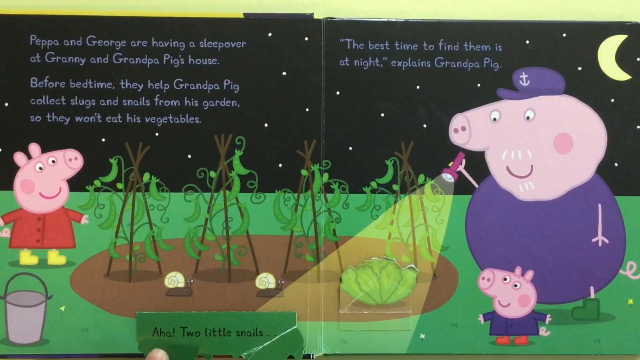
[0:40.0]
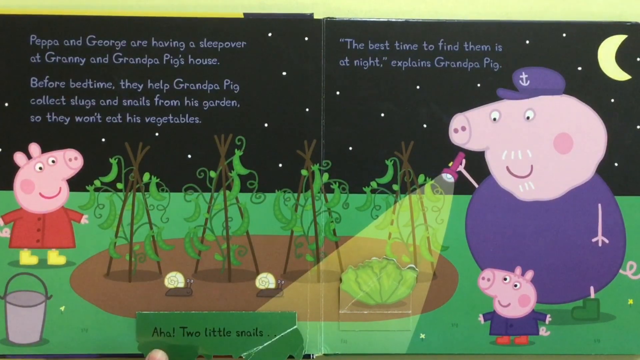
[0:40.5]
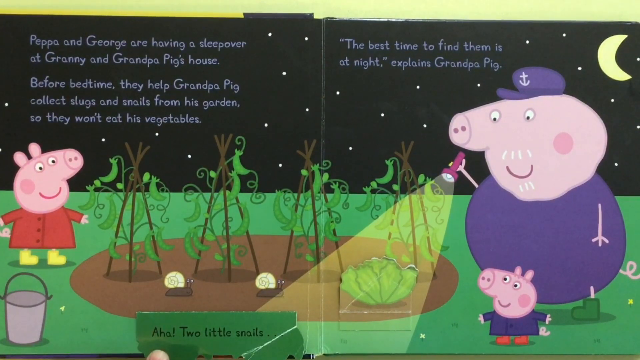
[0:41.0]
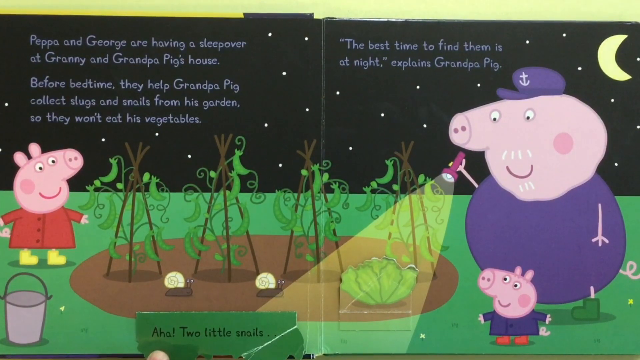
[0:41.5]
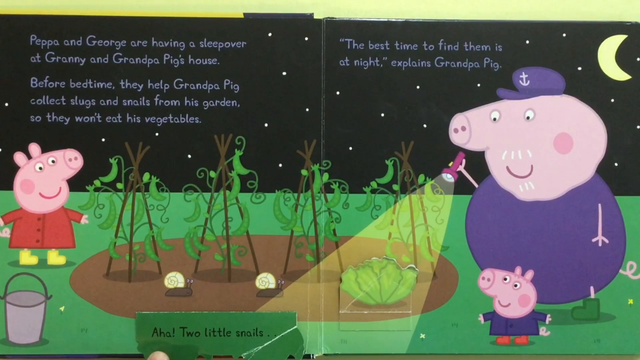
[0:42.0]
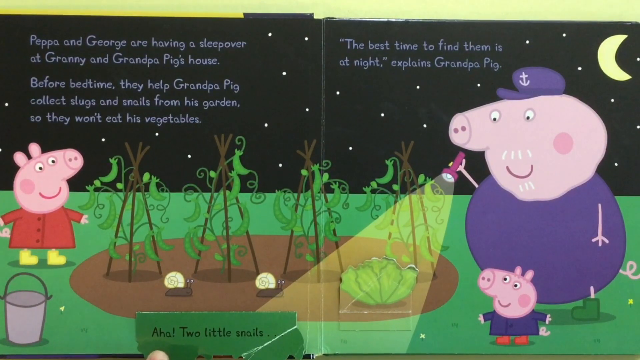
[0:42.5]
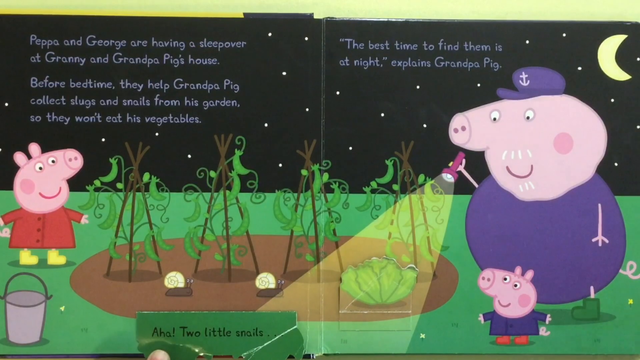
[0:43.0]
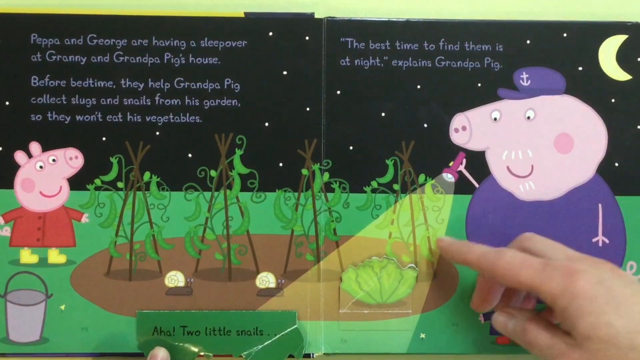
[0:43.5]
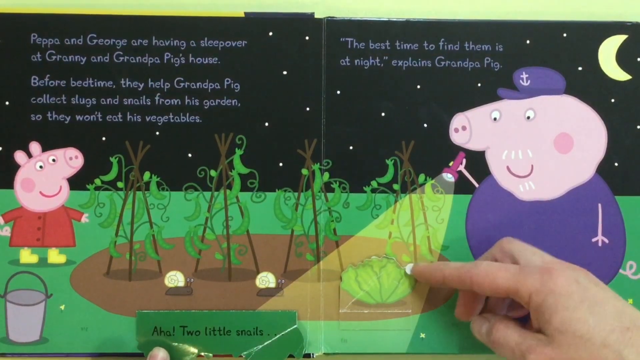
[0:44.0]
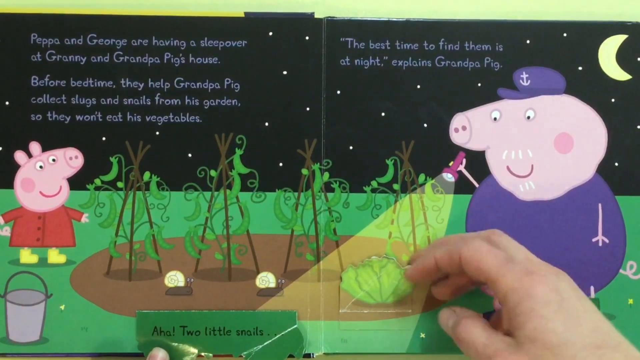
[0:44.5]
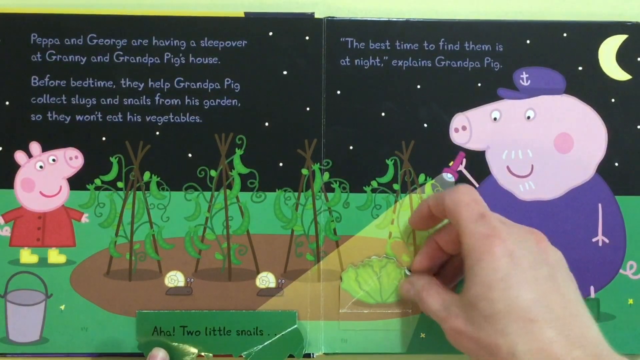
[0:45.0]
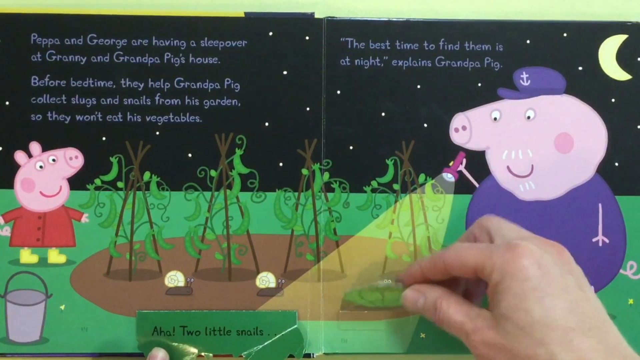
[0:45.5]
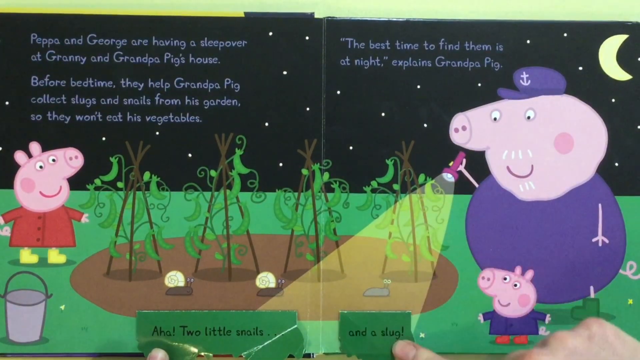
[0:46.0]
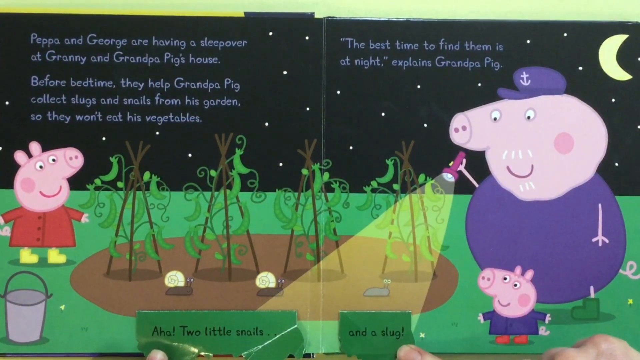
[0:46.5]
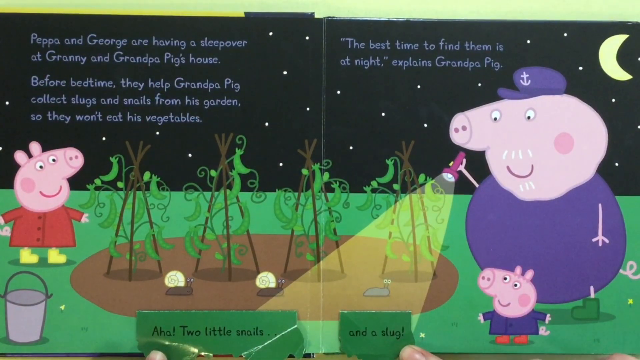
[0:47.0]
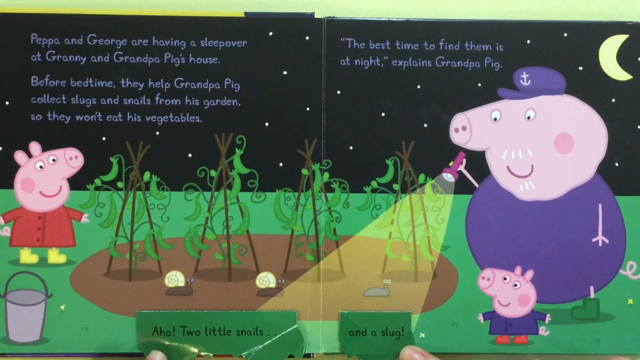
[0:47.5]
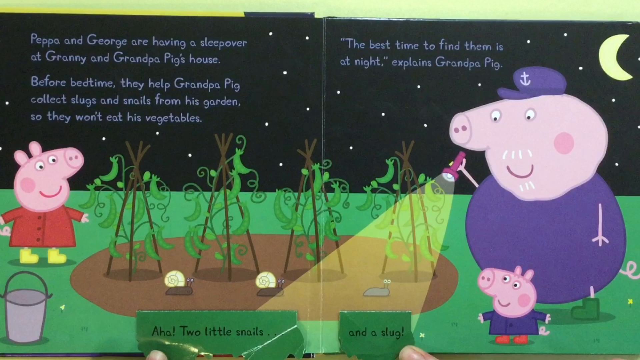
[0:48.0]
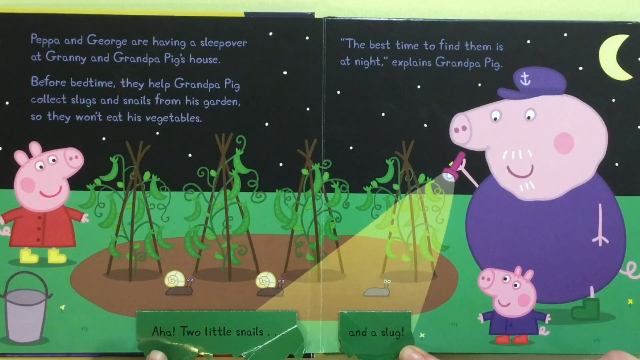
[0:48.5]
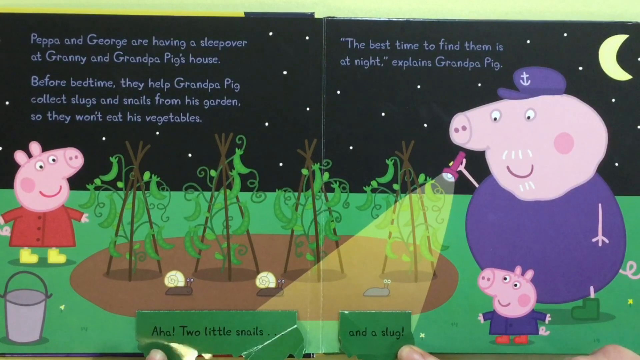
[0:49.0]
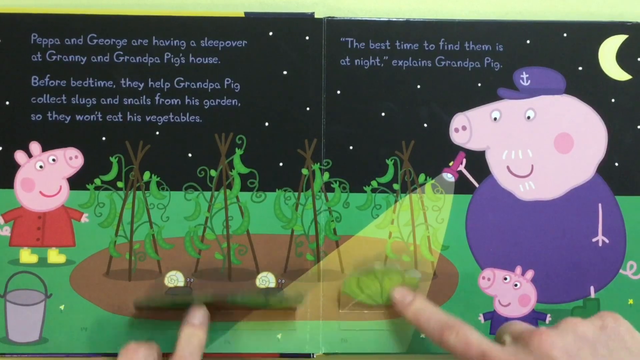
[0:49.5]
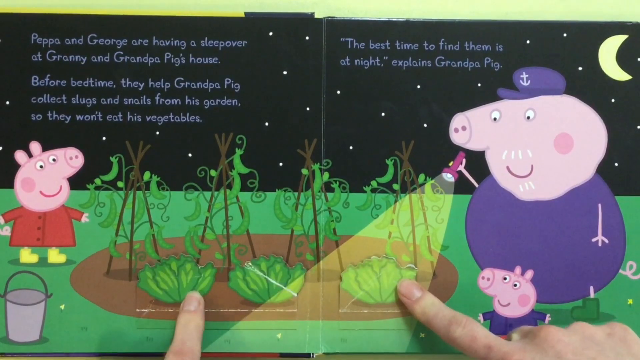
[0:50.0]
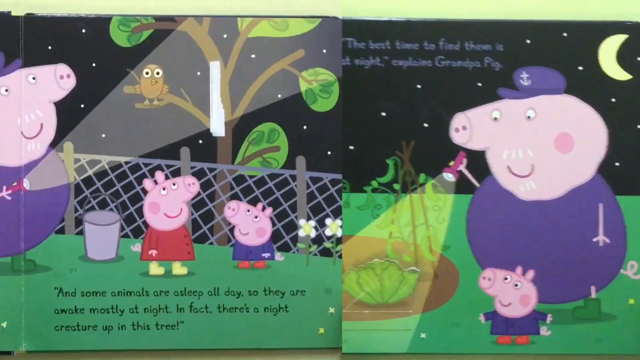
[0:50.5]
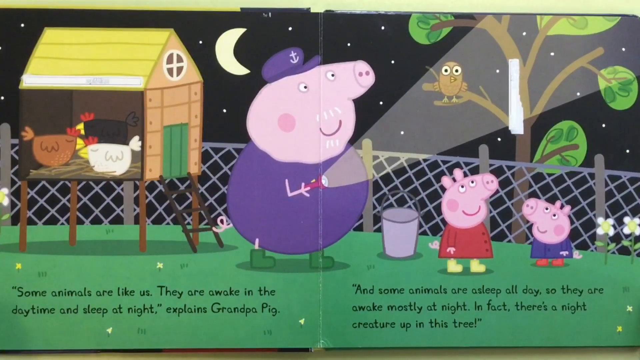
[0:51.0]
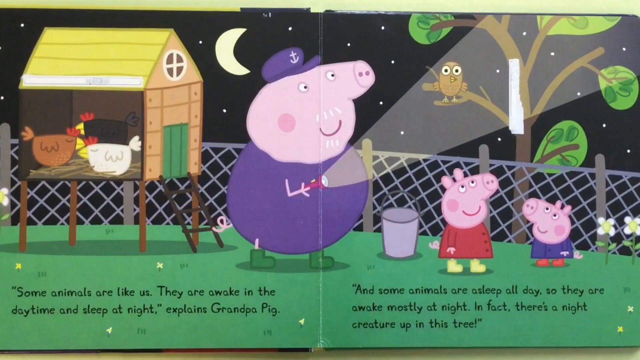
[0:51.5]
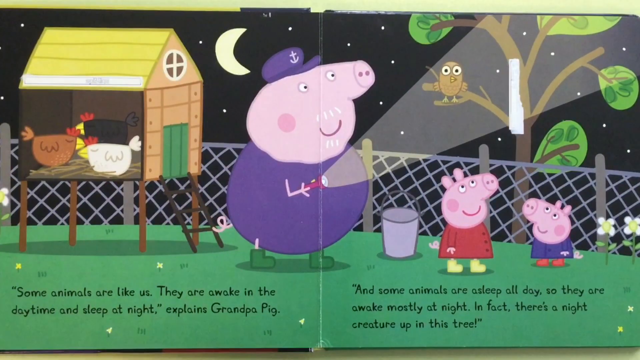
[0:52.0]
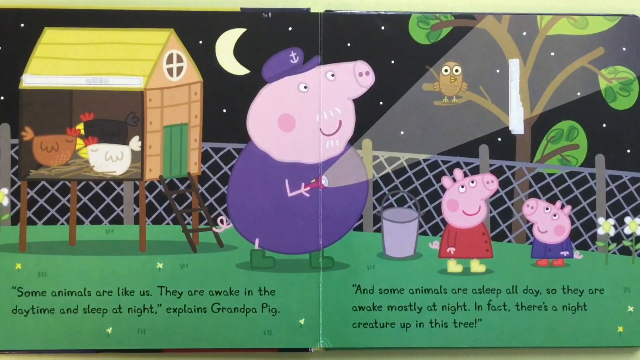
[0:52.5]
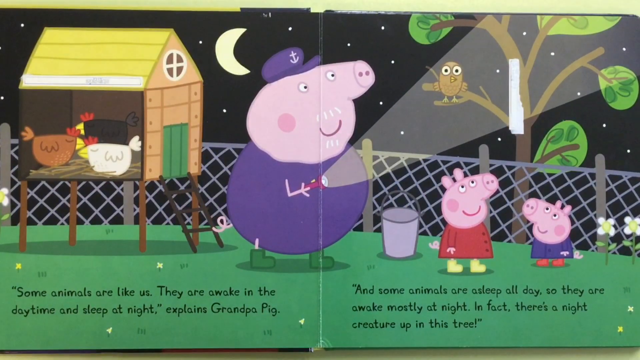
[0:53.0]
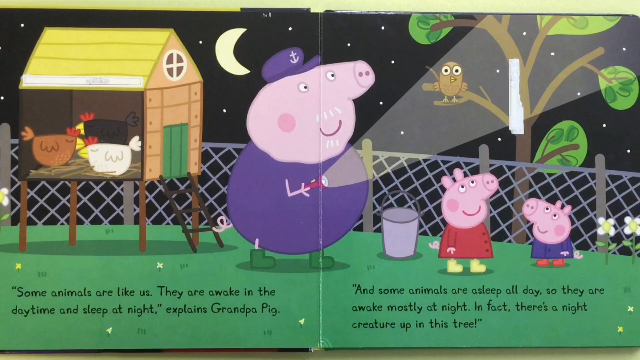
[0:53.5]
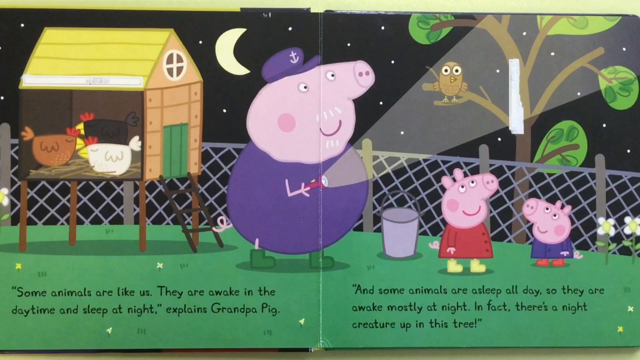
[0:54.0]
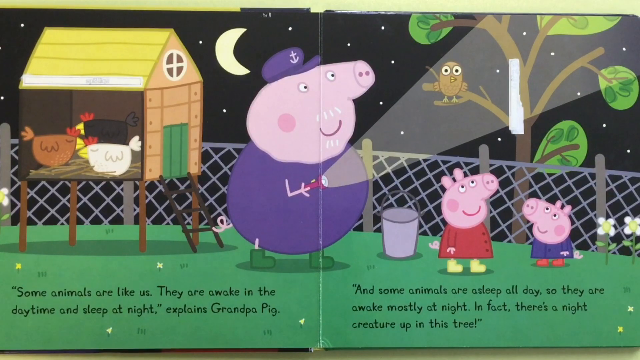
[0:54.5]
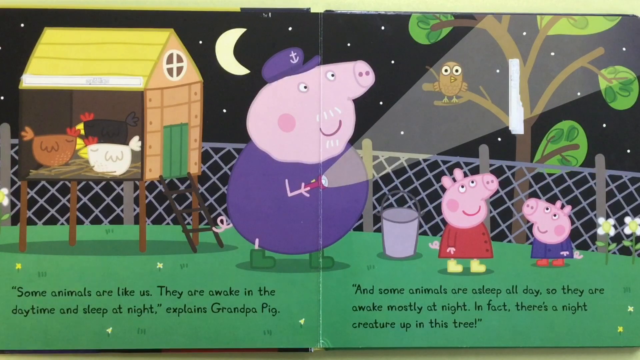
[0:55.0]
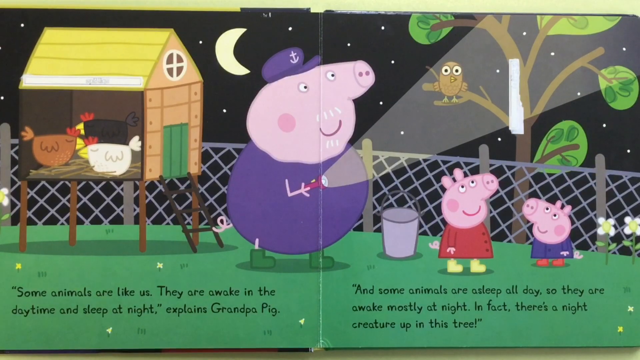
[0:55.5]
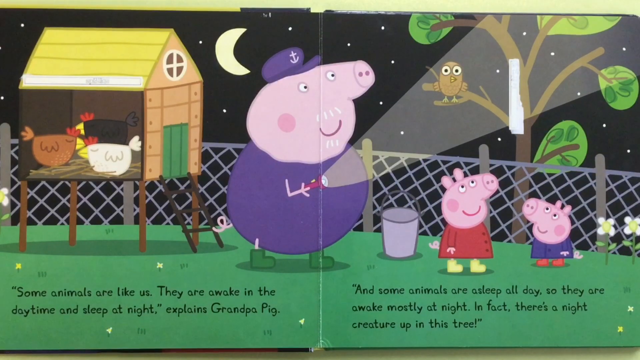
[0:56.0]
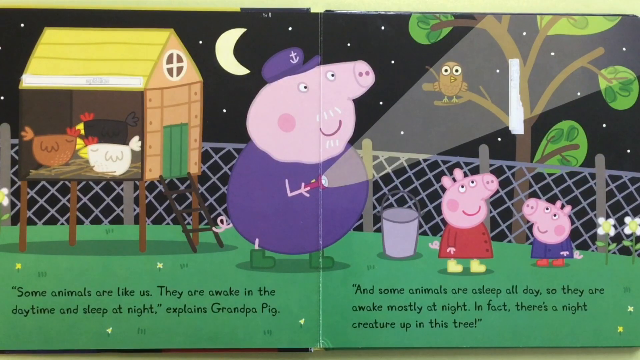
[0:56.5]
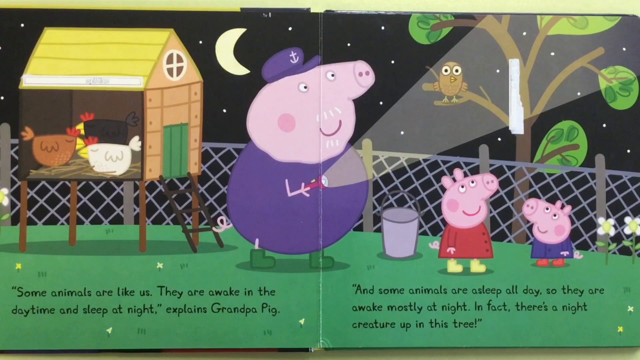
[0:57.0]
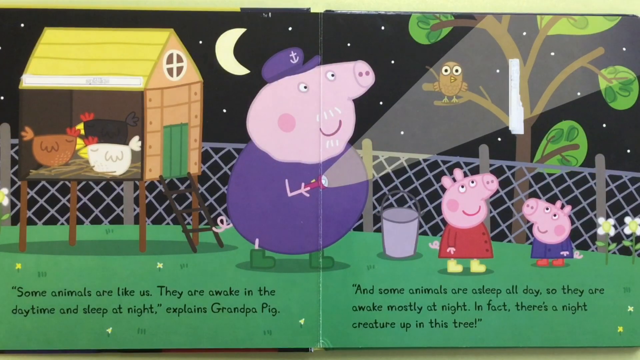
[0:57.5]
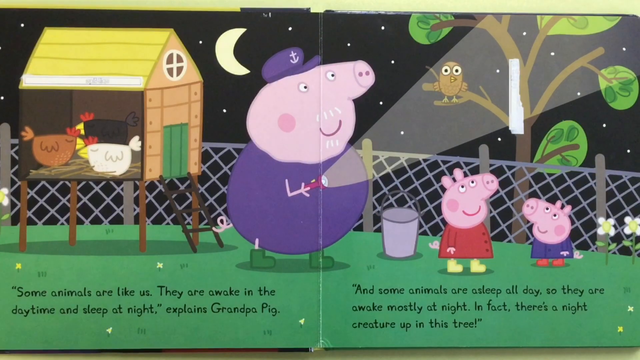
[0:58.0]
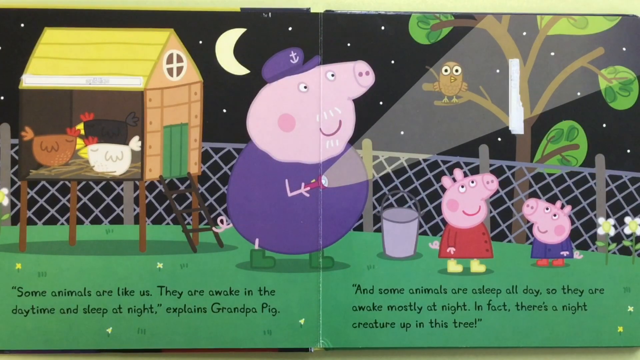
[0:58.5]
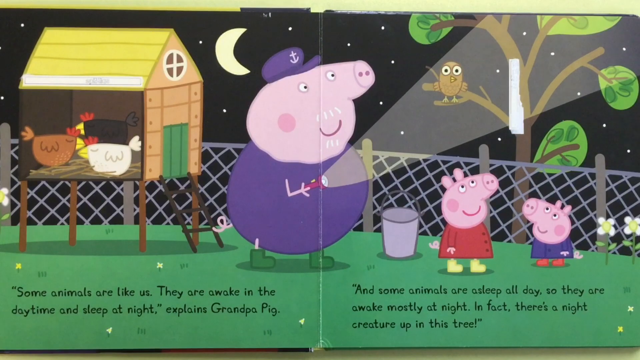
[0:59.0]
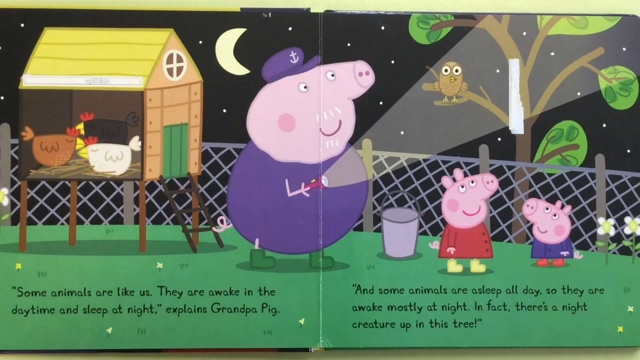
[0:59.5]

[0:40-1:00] The Peppa Pig book, Night Creatures, an interactive lift-the-flap book, shows the text: "Peppa and George are having a sleepover at Granny and Grandpa Pig's house. Before bedtime, they help Grandpa Pig collect slugs and snails from his garden so they won't eat his vegetables. The best time to find them is at night, explains Grandpa Pig." The characters are out at night. On the right side, Grandpa Pig wears a purple outfit and purple hat, with a yellow moon above him and a little piglet wearing purple underneath him. To the left is Peppa, a little piglet in a red dress and yellow boots. Grandpa shines his light on the garden, where there are lettuce and peas, looking for slugs and snails.